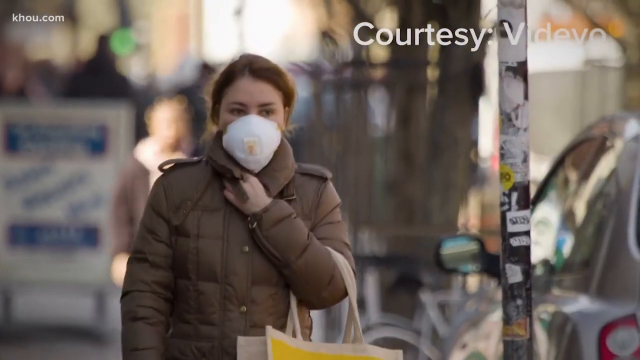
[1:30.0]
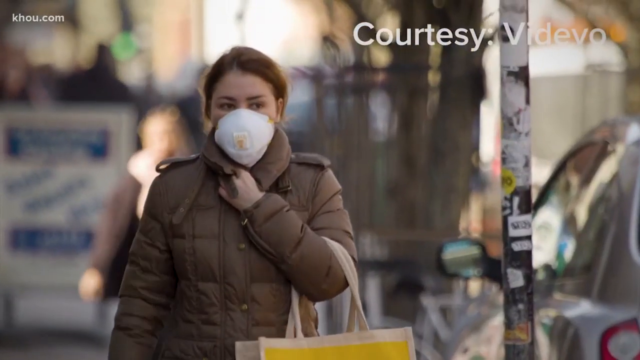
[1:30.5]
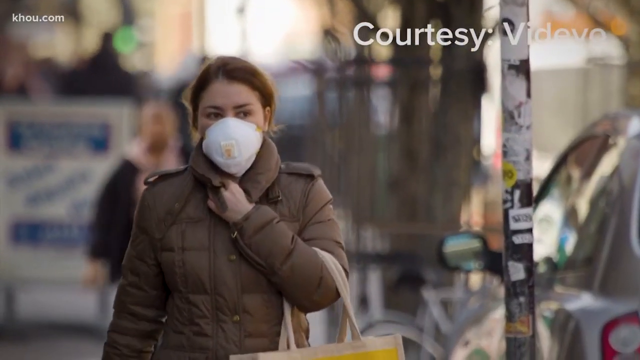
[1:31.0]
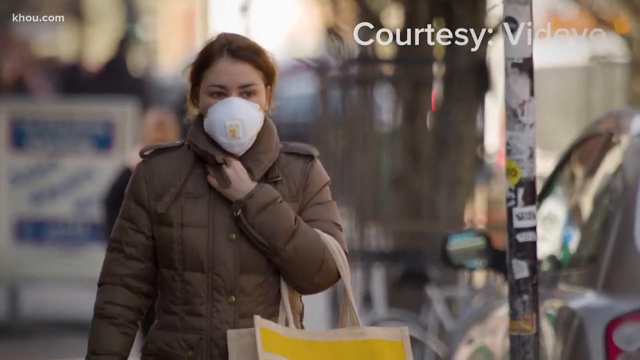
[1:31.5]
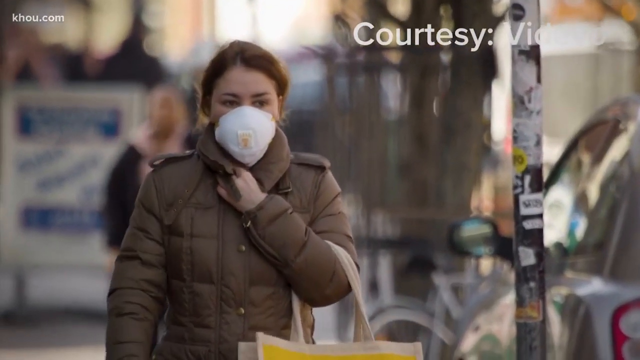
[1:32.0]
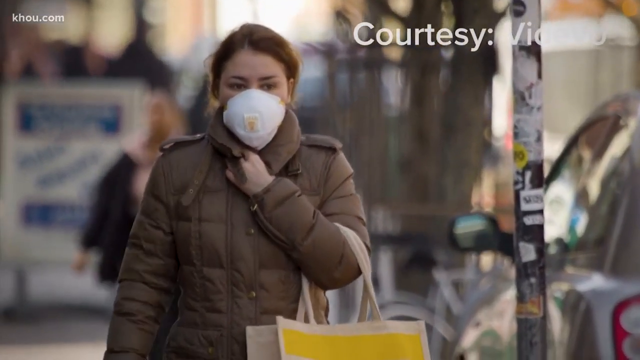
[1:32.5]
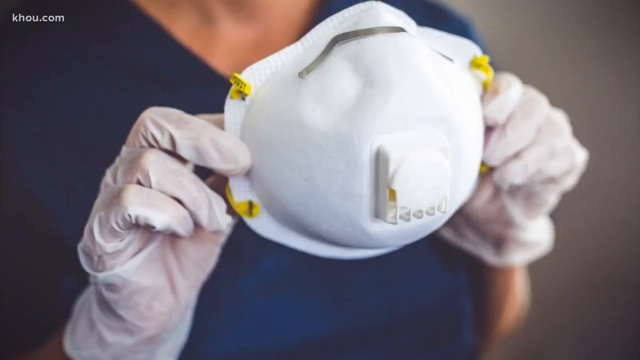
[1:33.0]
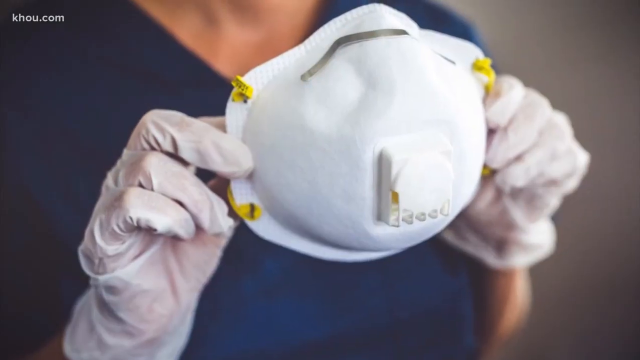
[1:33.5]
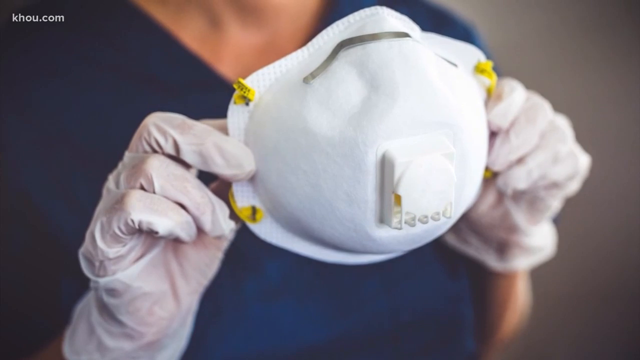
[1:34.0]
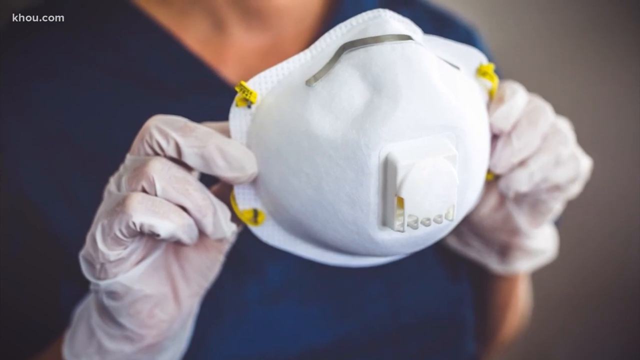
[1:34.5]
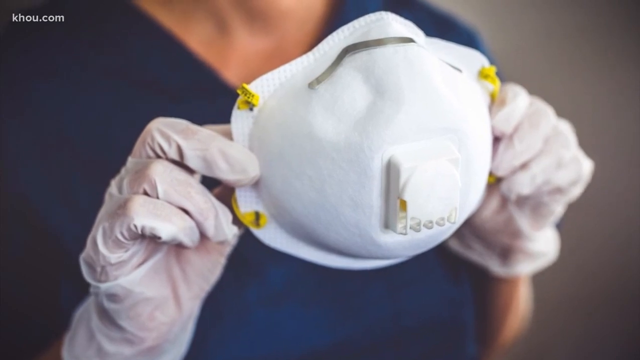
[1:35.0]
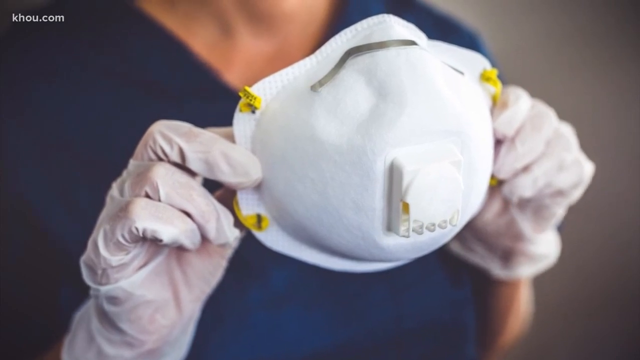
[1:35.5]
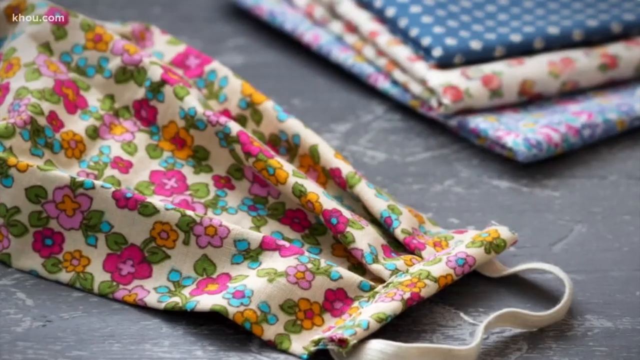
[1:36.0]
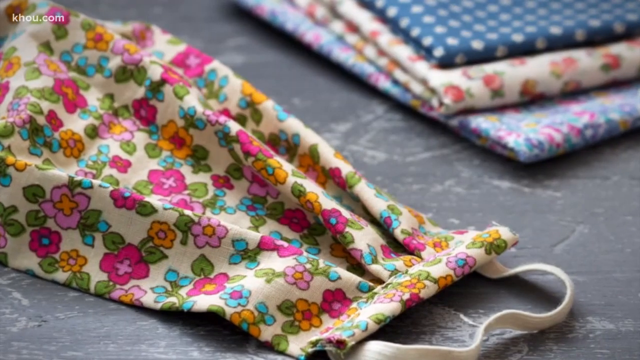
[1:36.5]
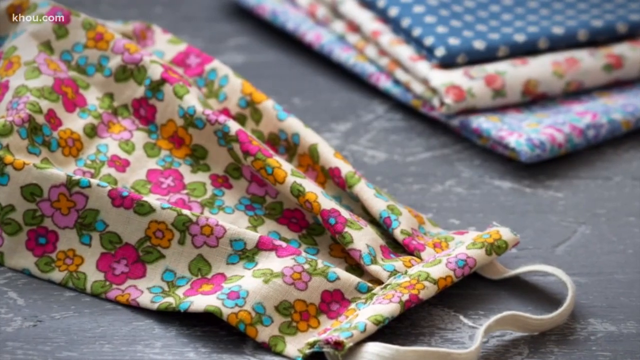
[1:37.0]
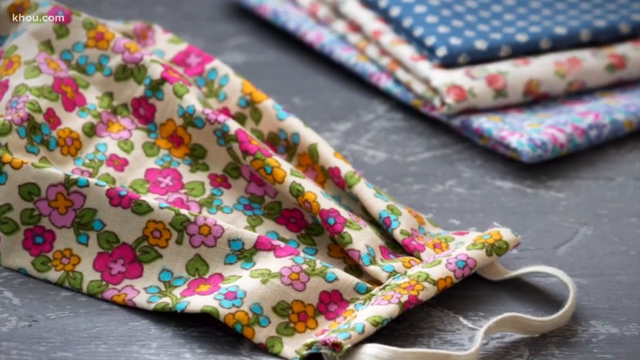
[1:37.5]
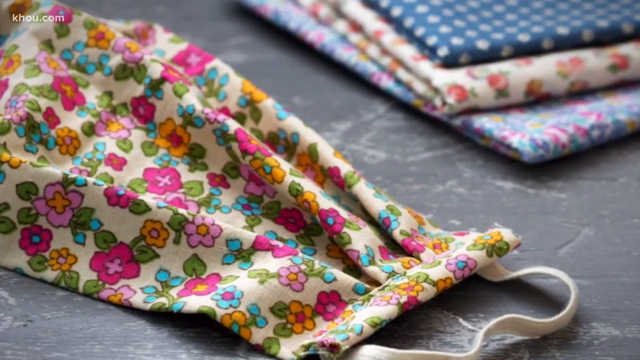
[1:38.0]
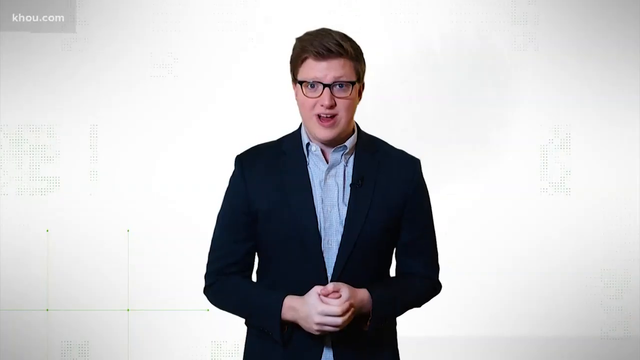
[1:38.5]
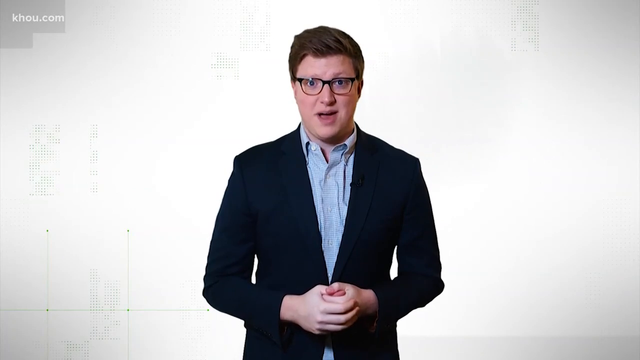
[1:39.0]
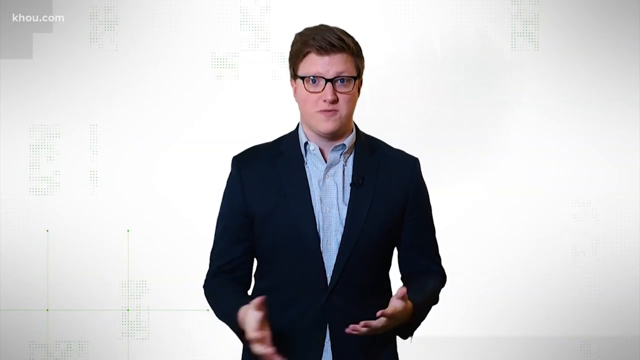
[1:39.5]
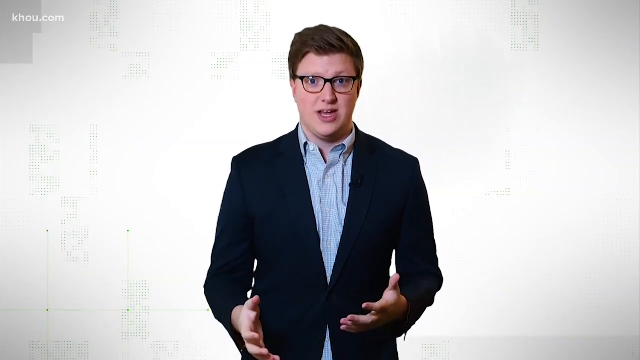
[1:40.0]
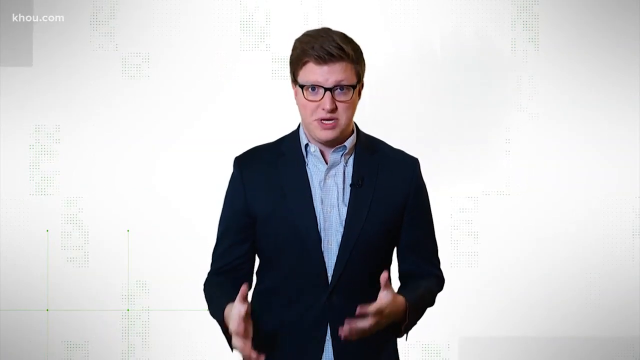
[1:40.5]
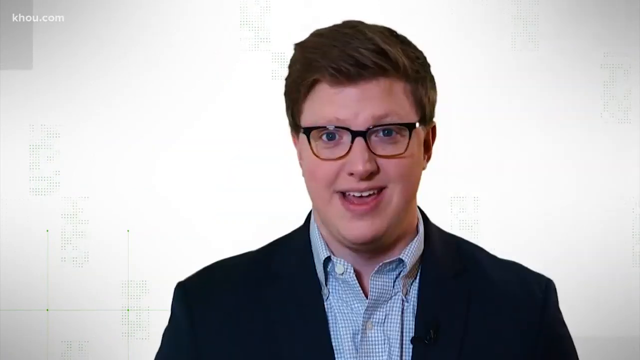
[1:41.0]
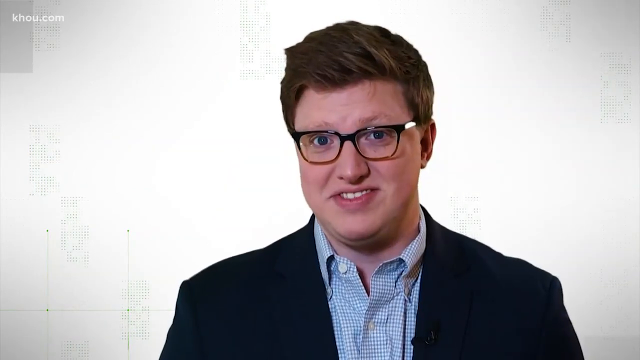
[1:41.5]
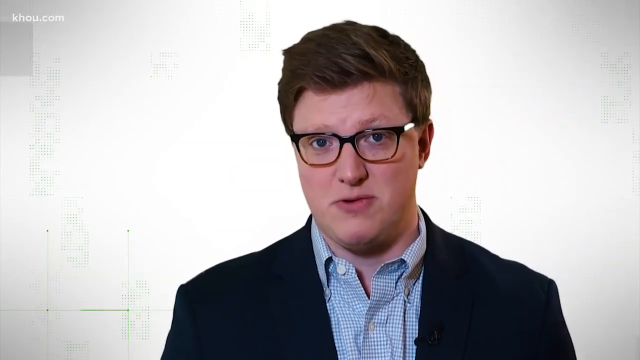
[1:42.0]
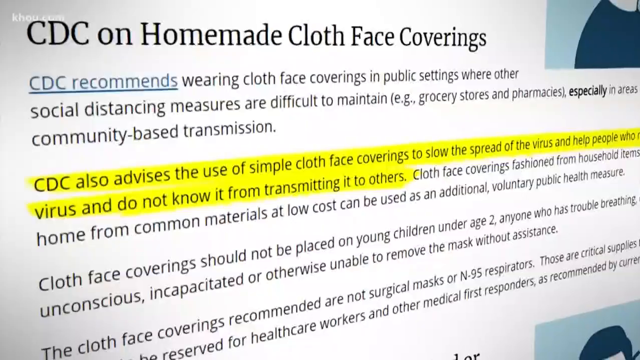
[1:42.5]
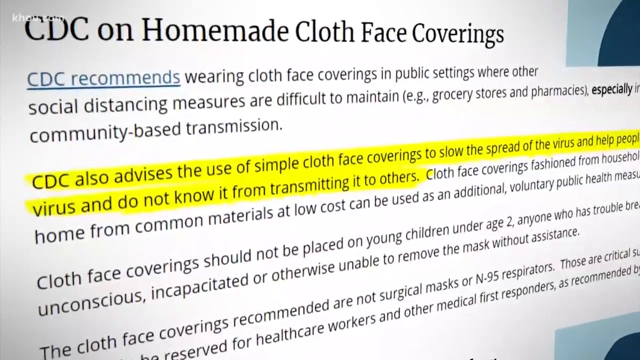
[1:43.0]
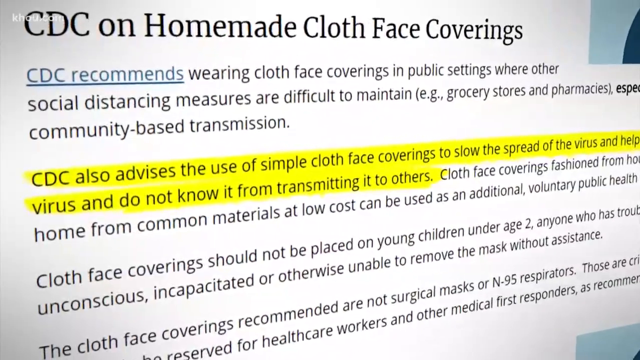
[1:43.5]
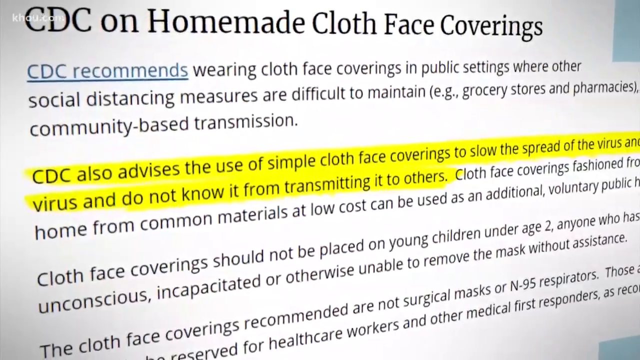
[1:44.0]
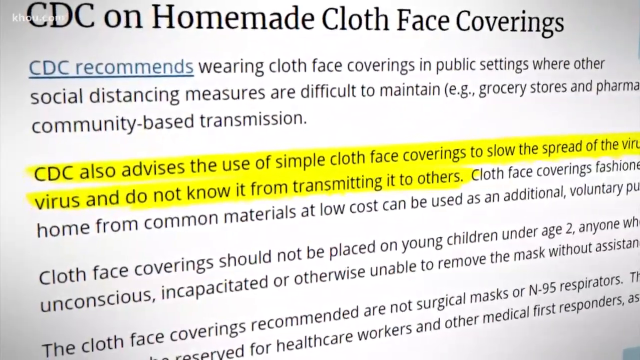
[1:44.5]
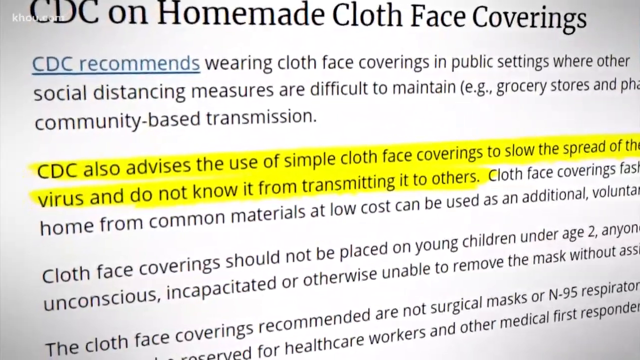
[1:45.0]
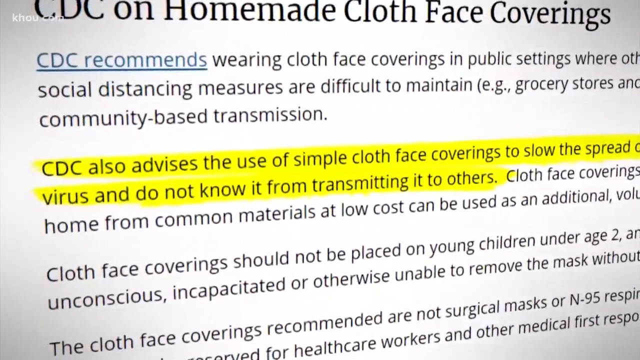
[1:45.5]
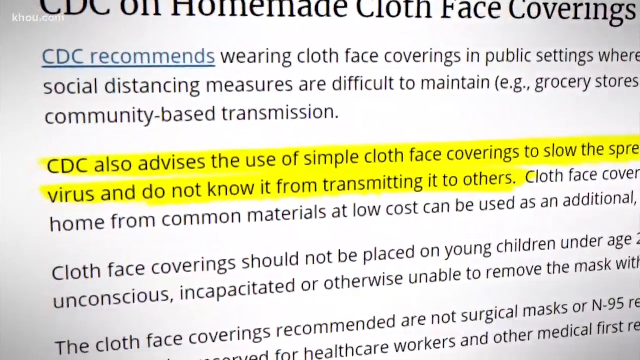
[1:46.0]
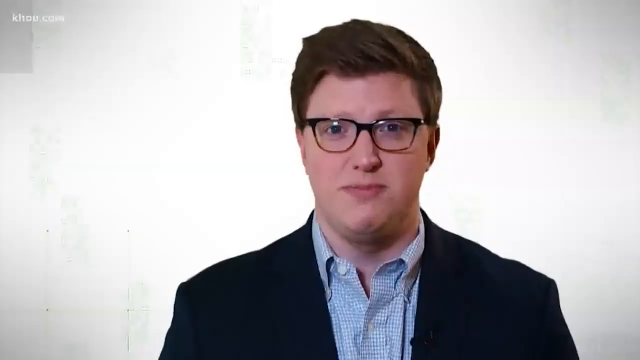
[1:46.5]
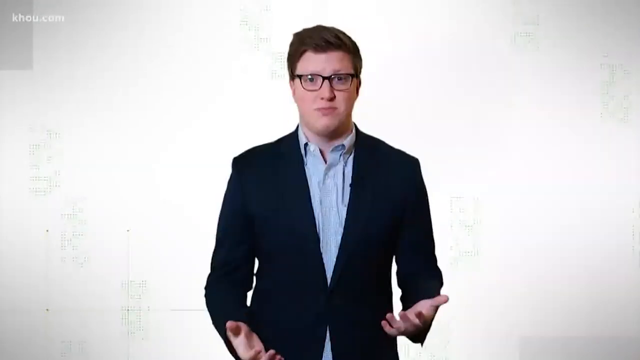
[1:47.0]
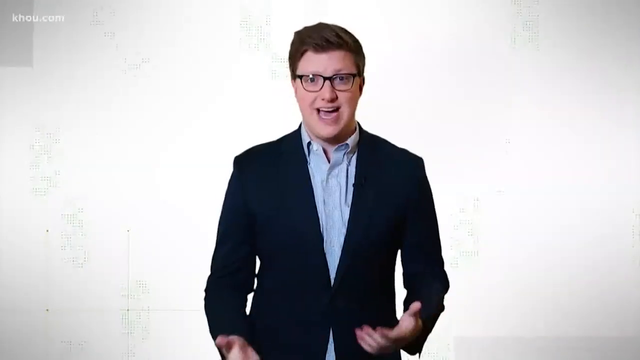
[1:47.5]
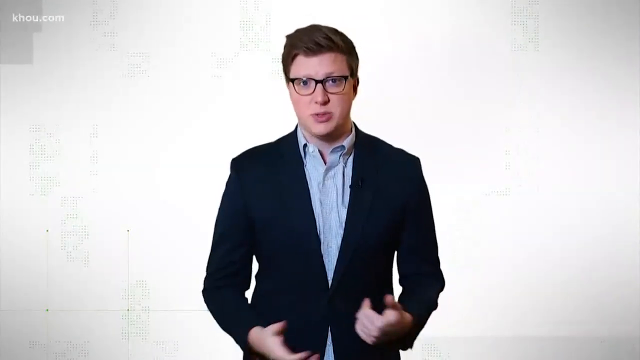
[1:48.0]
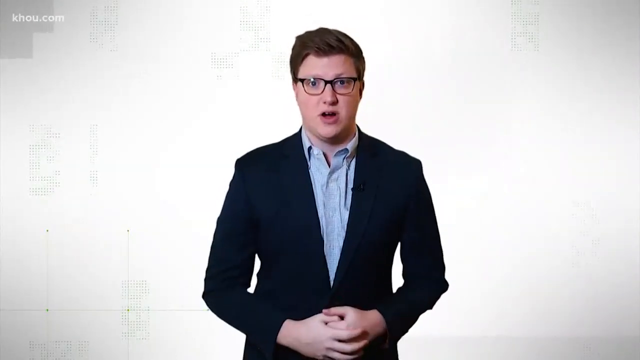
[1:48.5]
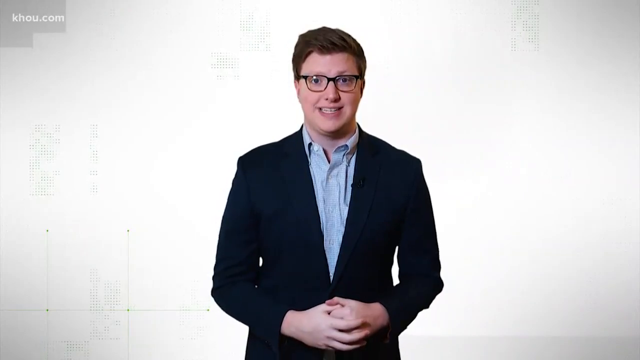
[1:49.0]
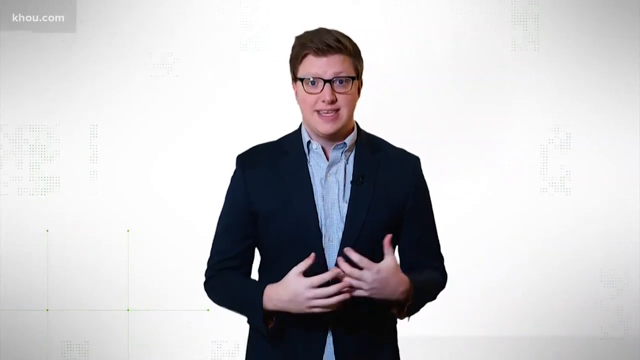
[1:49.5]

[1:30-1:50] In the top right-hand corner of the video it says "courtesy of VidEvo". A woman in a brown coat walks down a street wearing quite a large white mask, with a pale brown bag over her shoulder. The video cuts to a zoomed-in shot of a mask, which looks like a medical-grade mask, held at either side by a woman with white gloves. The video then cuts to some homemade masks; the one in focus has different coloured flowers on it, such as pink, orange and purple. The video cuts back to the presenter speaking at the camera before another extract from an article is shown on the screen, titled "CDC on homemade cloth face coverings". The video cuts back to the presenter, first zoomed in on his head and shoulders and then zoomed out to show his full top half.